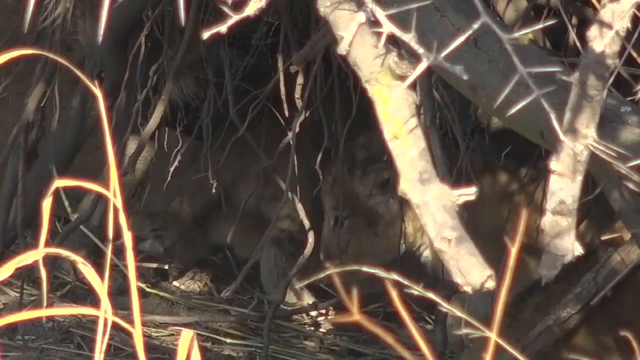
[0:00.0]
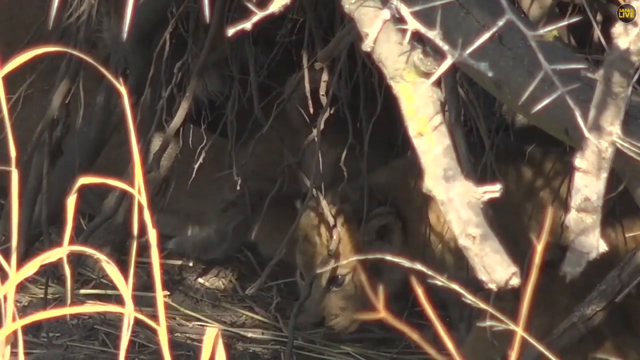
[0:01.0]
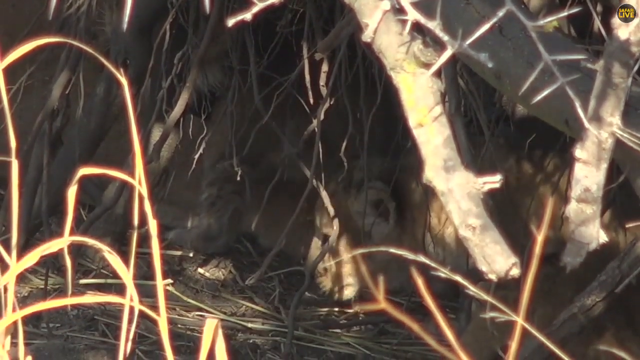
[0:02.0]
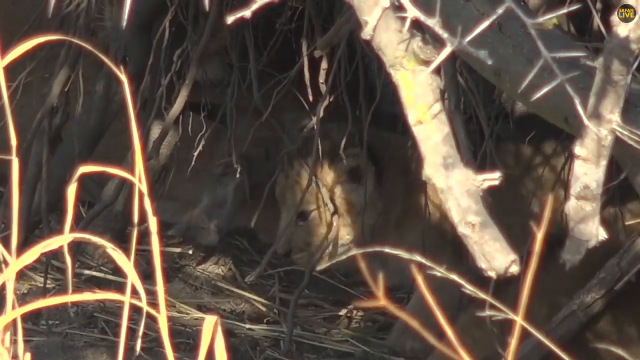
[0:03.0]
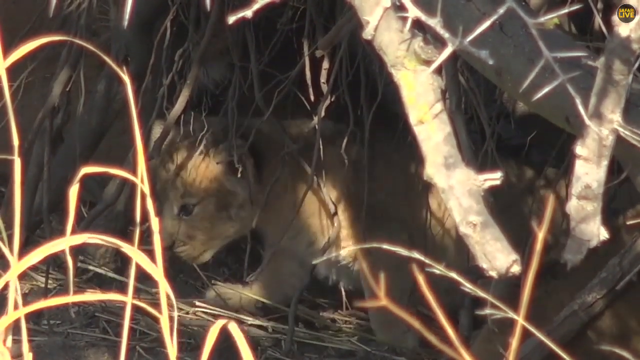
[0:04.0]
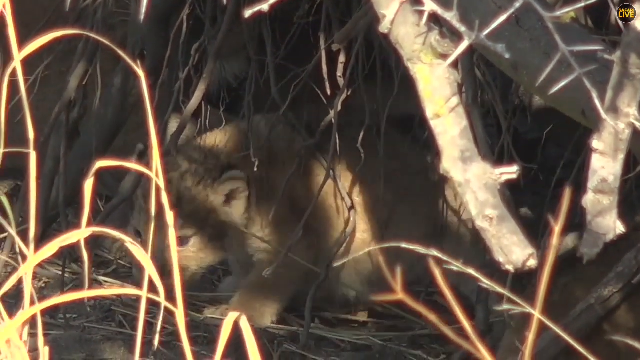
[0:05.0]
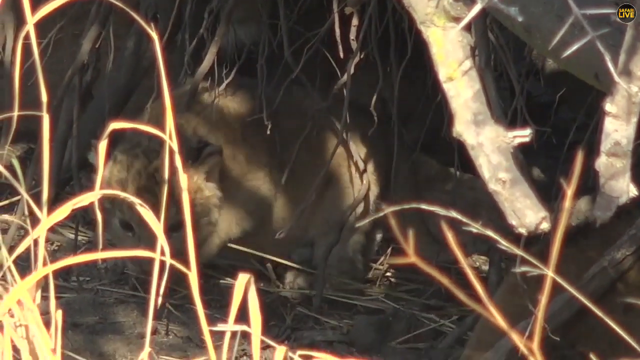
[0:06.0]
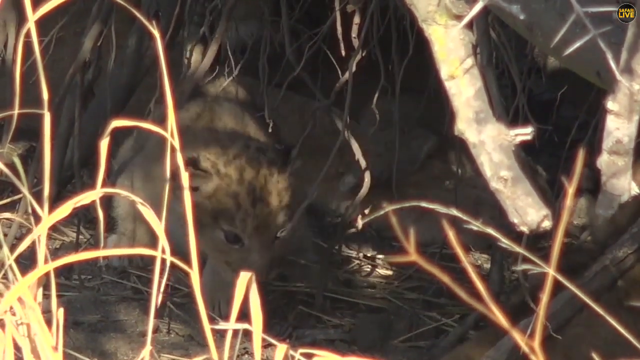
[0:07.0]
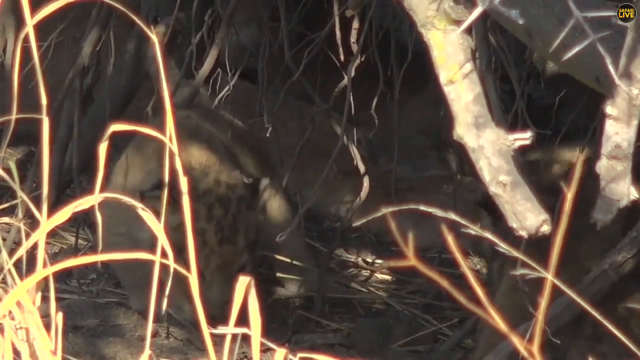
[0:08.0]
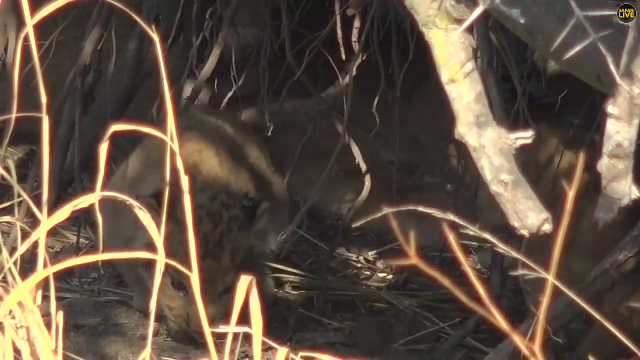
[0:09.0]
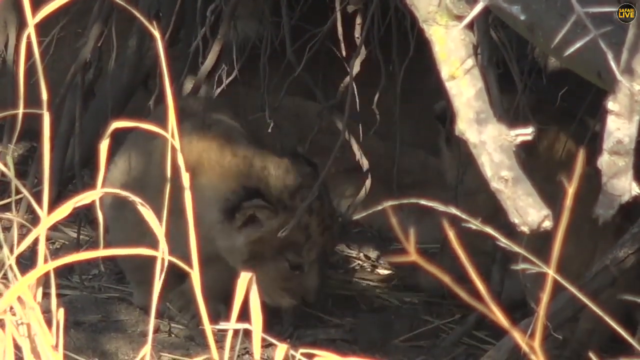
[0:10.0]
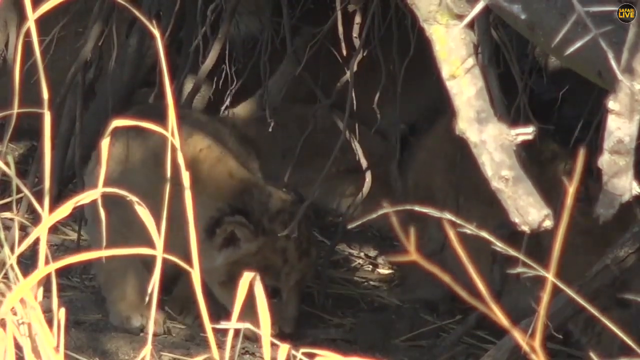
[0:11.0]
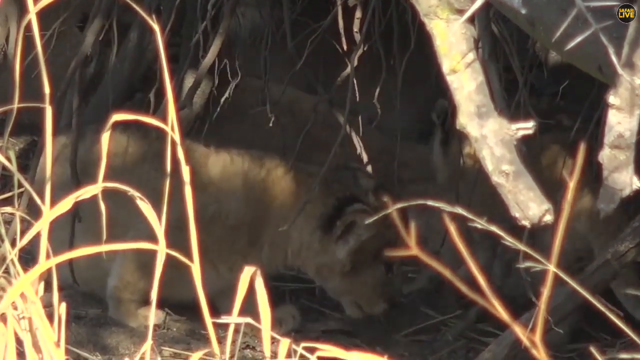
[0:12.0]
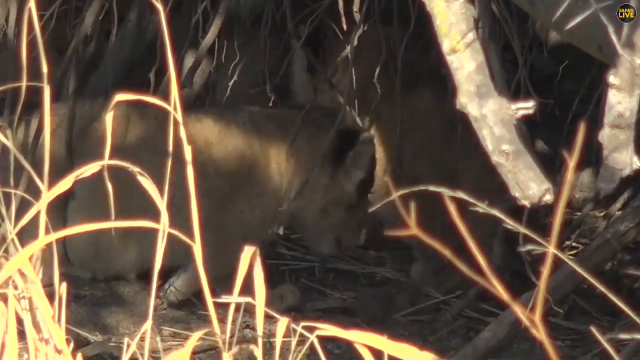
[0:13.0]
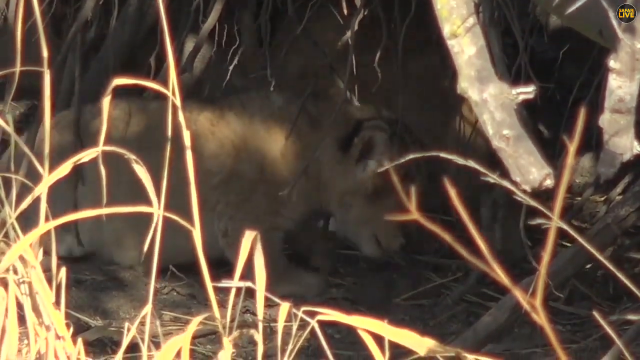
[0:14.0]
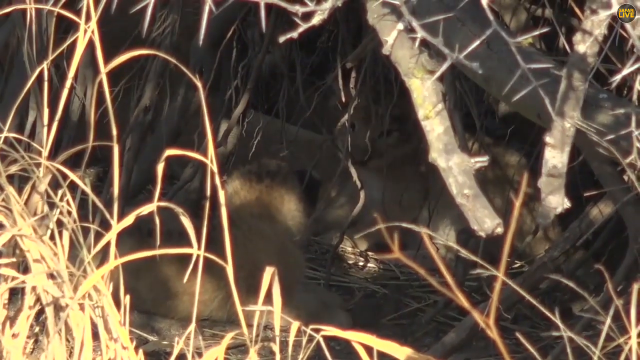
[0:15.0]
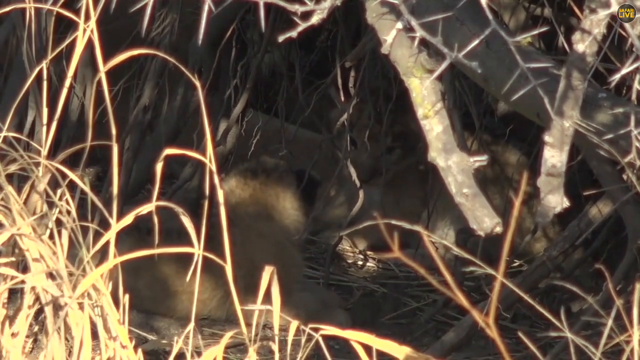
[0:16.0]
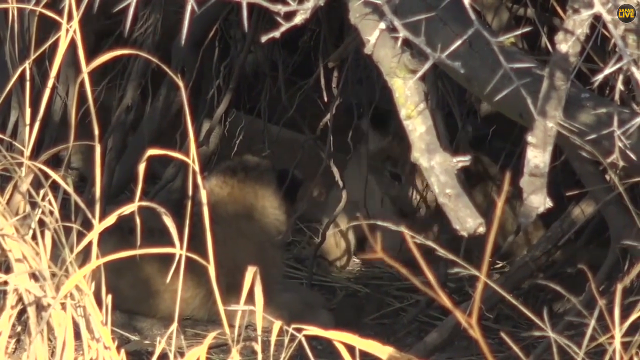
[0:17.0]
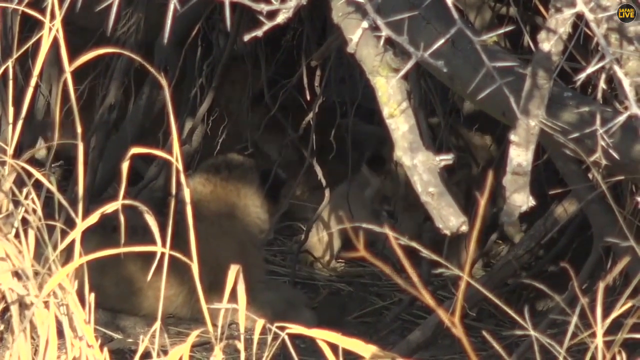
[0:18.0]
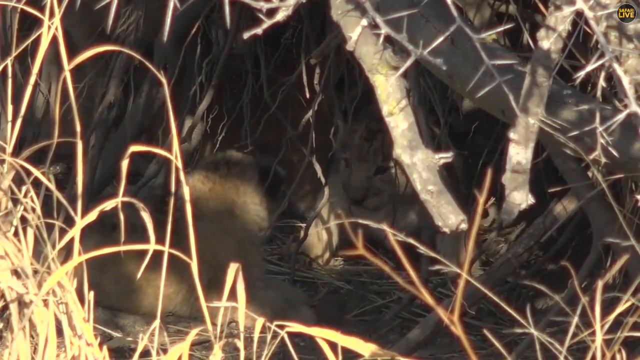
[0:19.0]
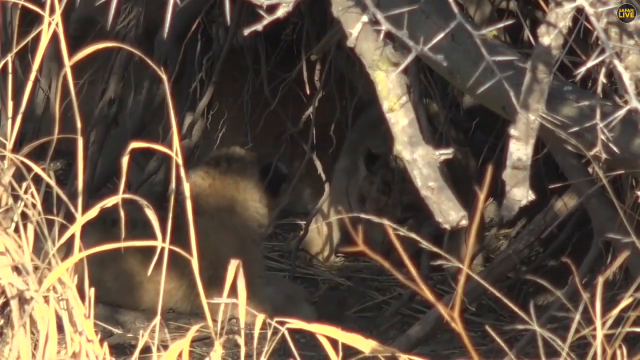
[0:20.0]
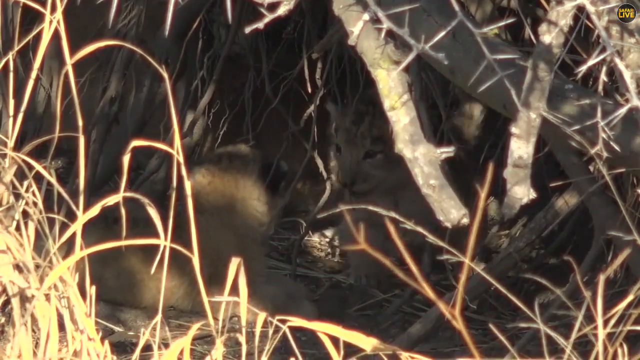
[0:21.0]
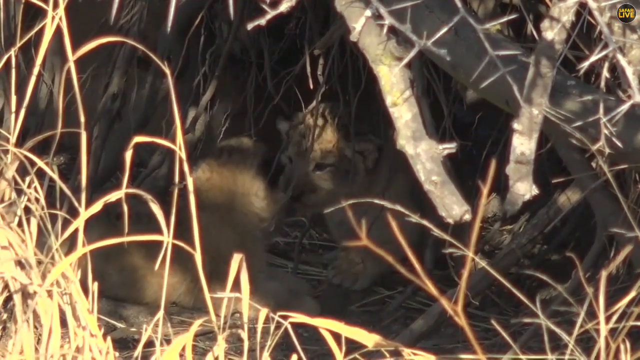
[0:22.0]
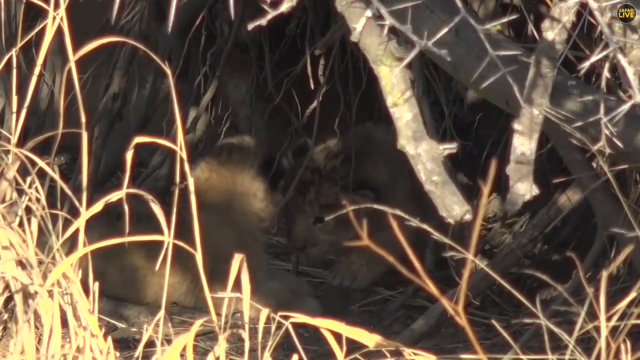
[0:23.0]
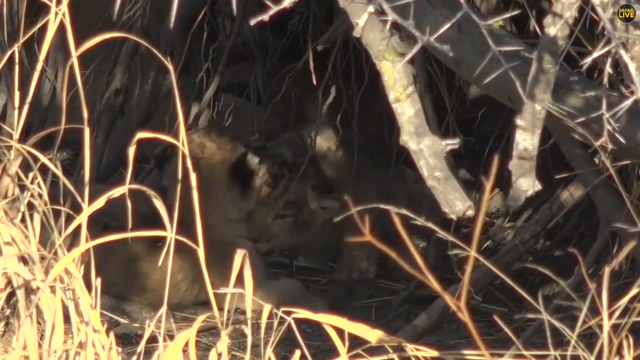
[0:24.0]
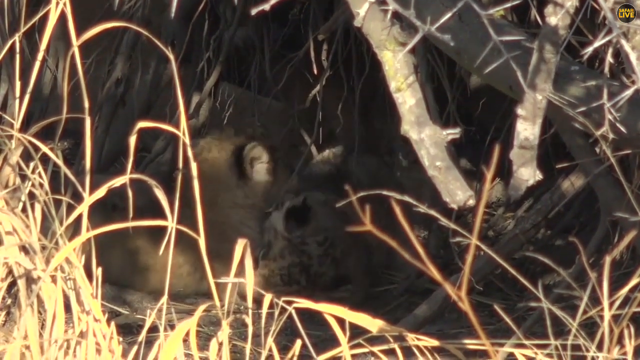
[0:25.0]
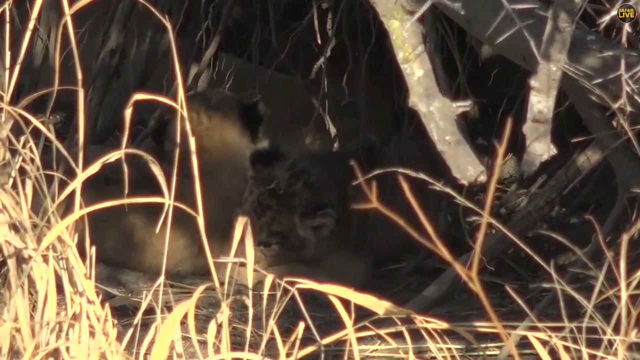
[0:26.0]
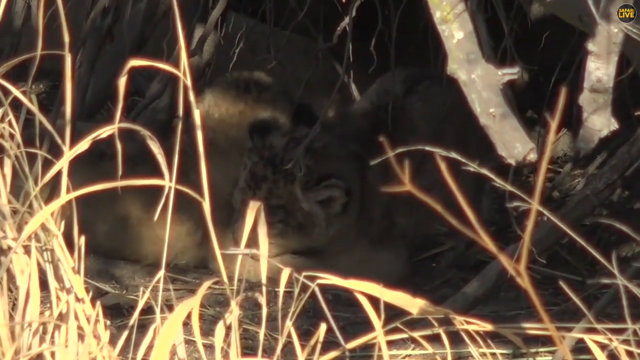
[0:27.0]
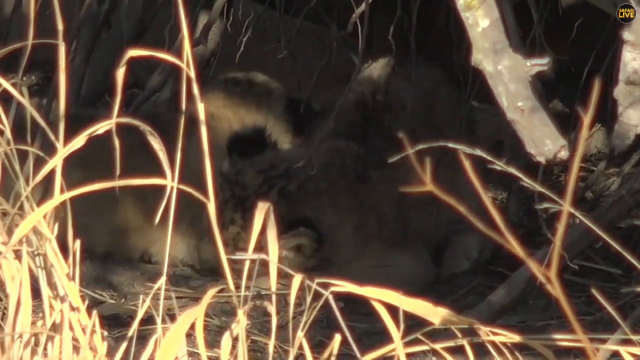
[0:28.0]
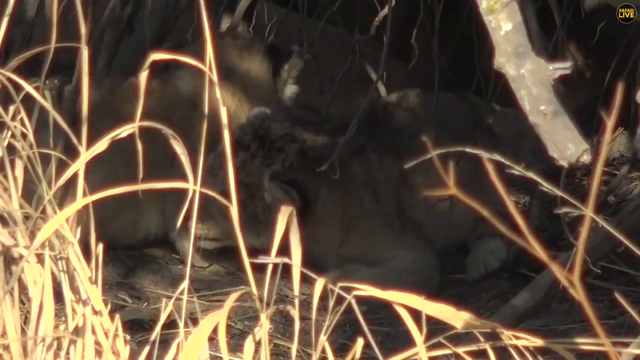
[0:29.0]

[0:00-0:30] The video opens on a group of tree branches, some very thick and others thin, with thorns on some of the thin ones. Through them, what seems to be the head of a small cub is barely visible; it appears to be a lion cub or a cheetah cub. As the video progresses, it becomes clear there are two cubs, not one. One of them slowly moves closer toward the camera while the other stays inside the den or hiding spot they are in. Some of the branches covering the spot have thorns and others do not. The cubs do not come out at all; the camera is zoomed in on the spot so it can watch them while they are inside.